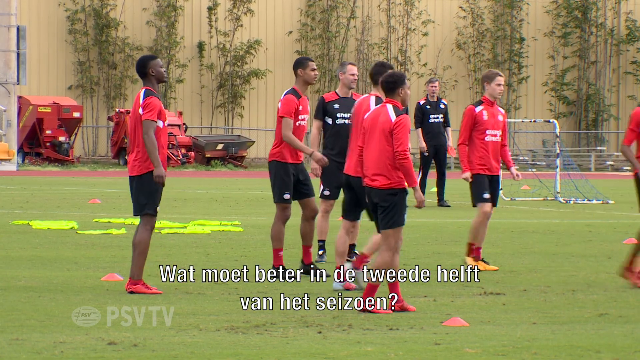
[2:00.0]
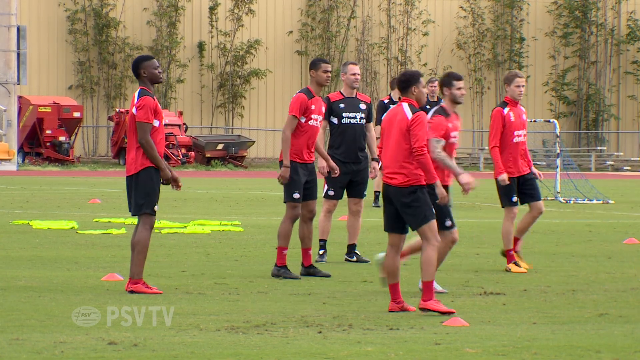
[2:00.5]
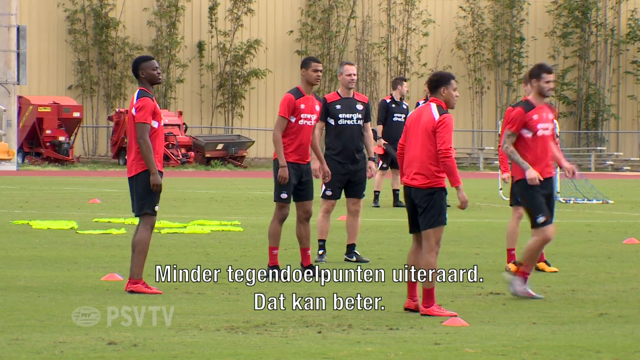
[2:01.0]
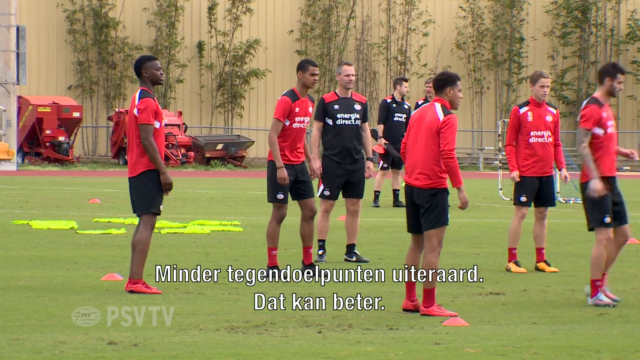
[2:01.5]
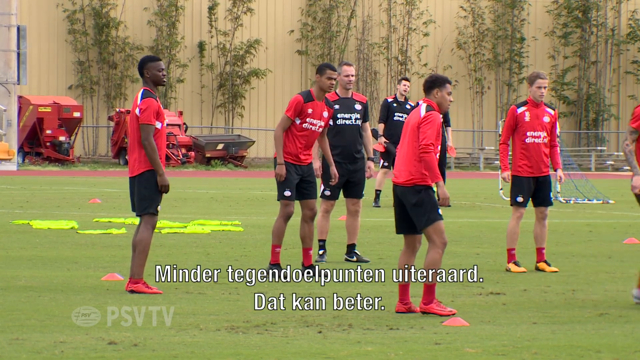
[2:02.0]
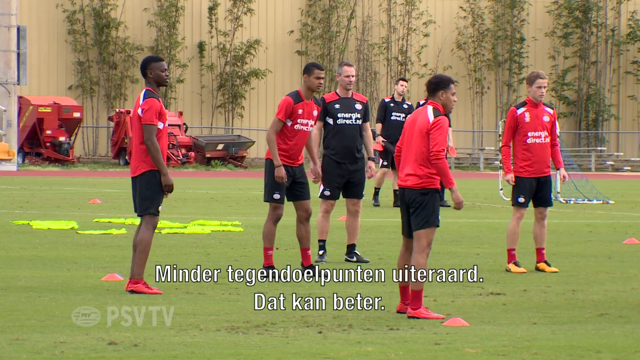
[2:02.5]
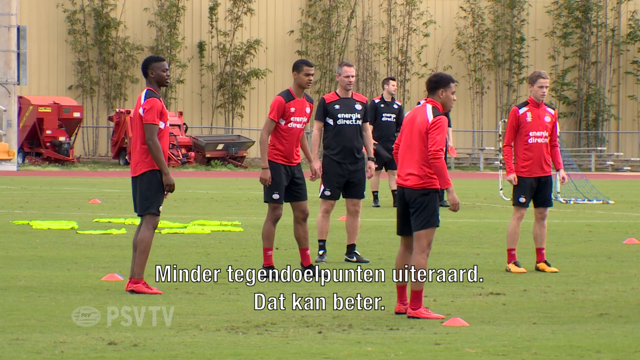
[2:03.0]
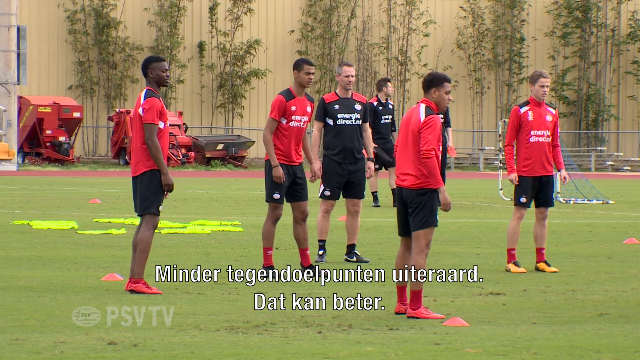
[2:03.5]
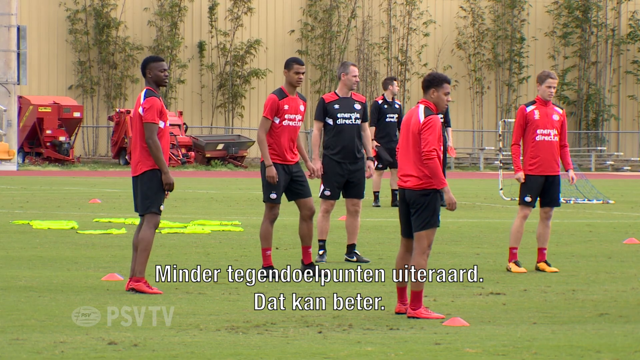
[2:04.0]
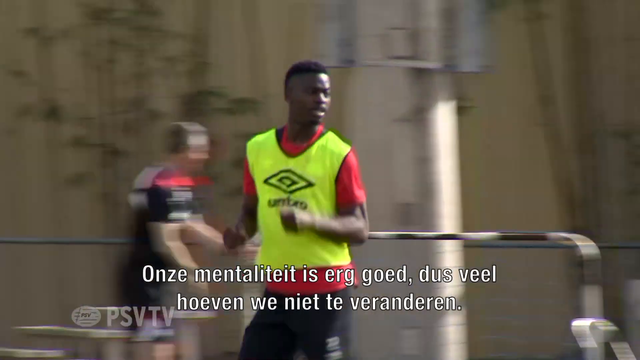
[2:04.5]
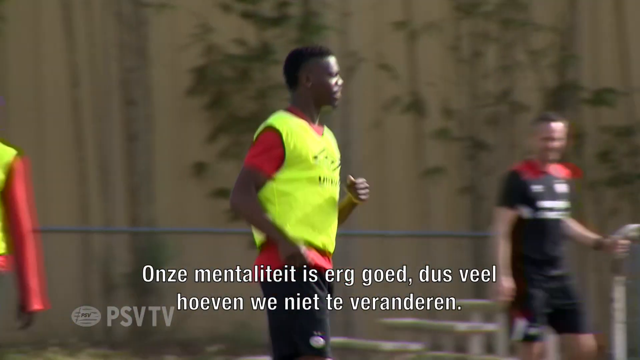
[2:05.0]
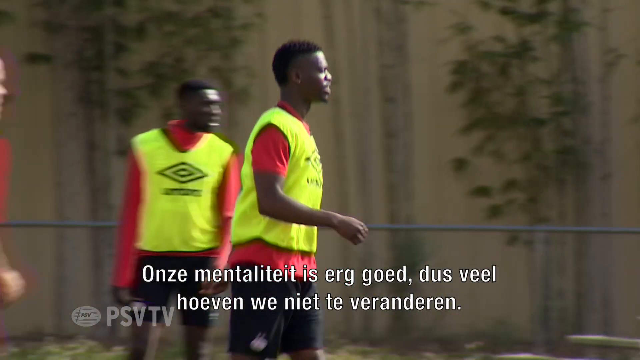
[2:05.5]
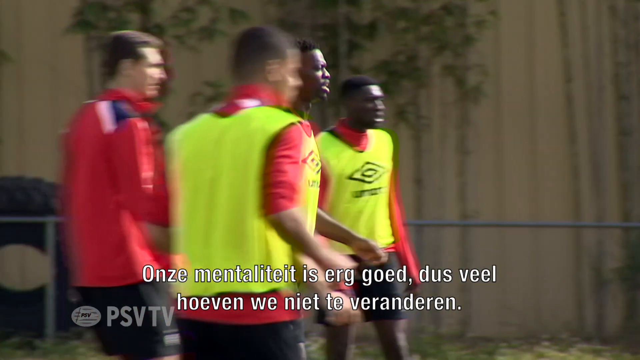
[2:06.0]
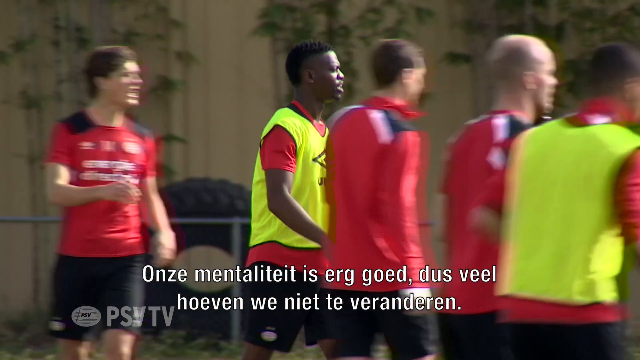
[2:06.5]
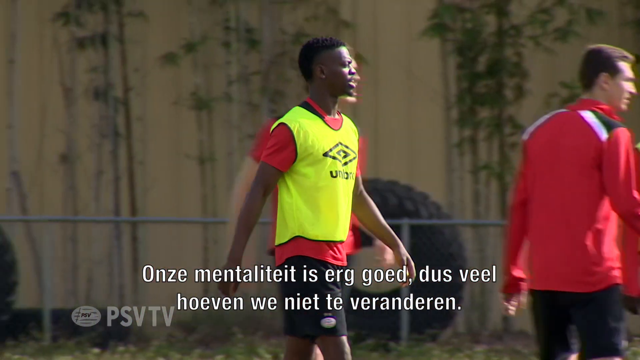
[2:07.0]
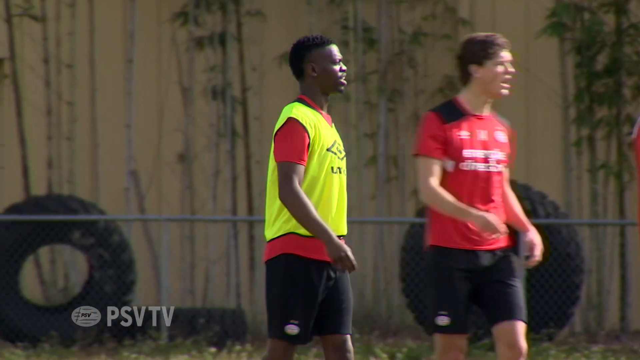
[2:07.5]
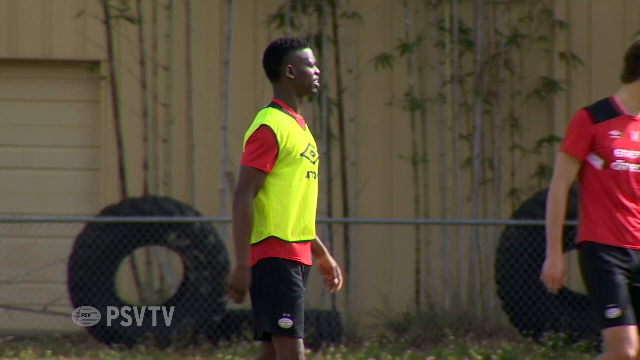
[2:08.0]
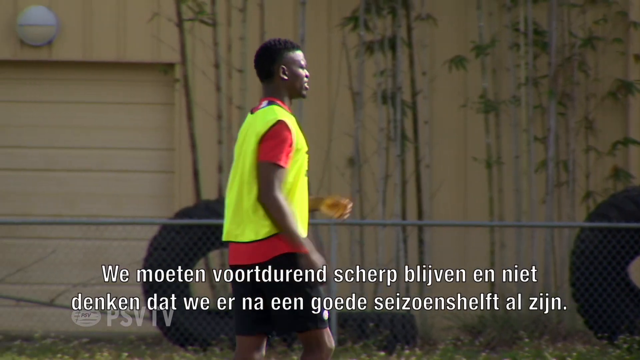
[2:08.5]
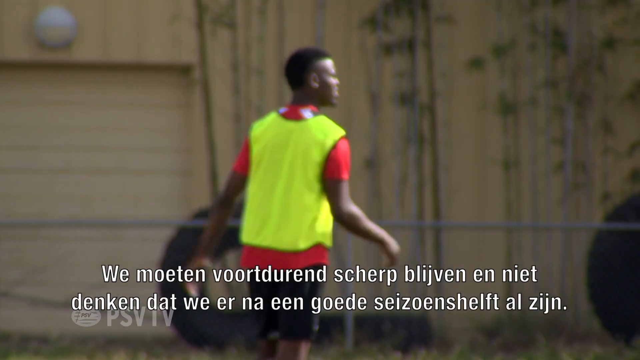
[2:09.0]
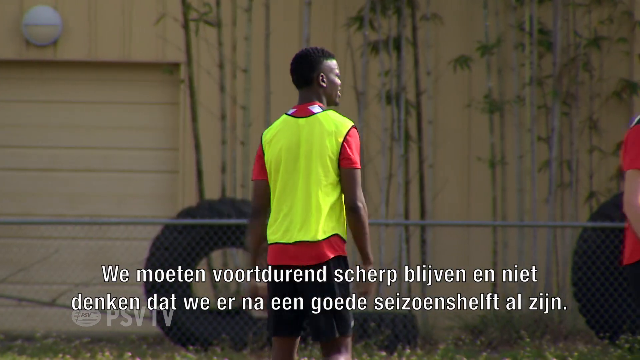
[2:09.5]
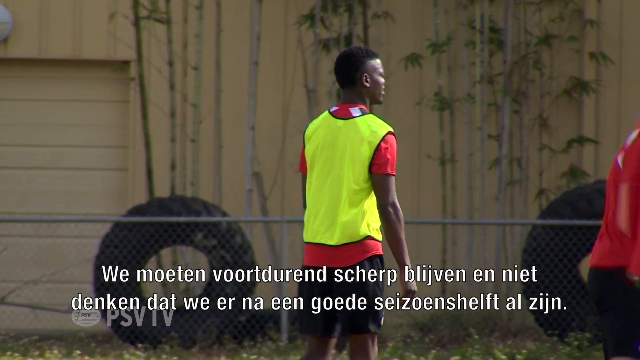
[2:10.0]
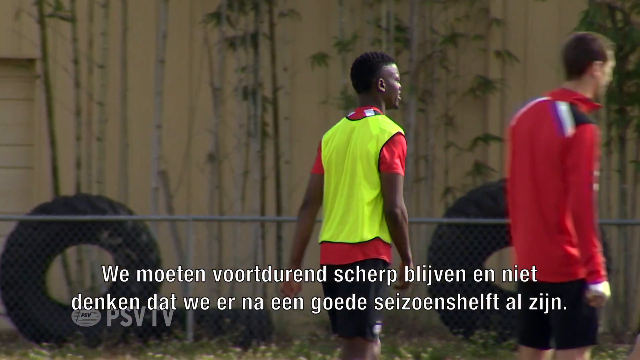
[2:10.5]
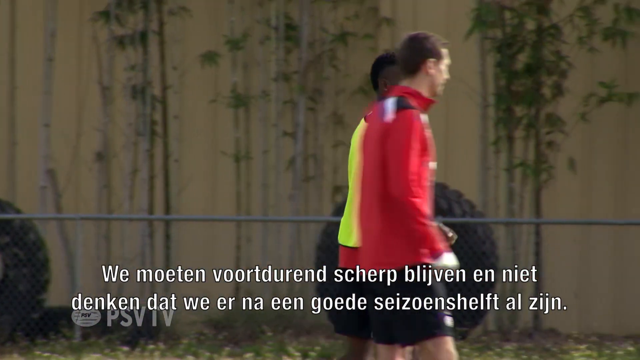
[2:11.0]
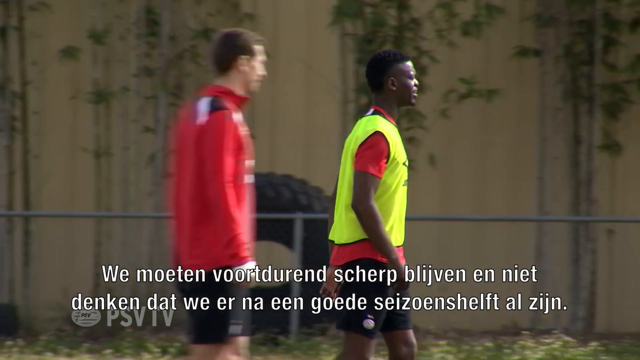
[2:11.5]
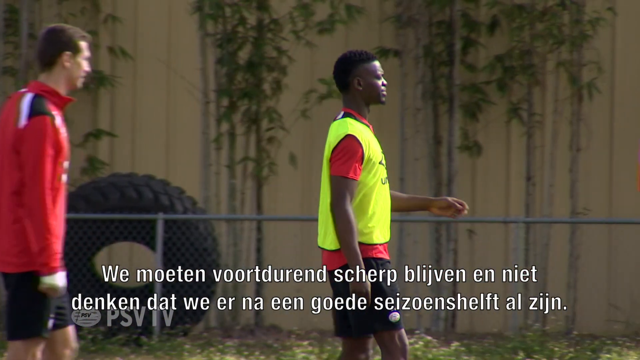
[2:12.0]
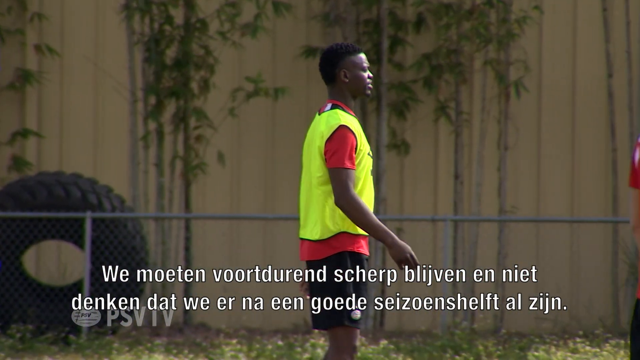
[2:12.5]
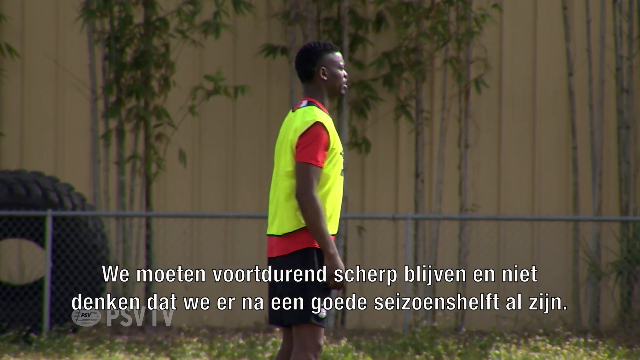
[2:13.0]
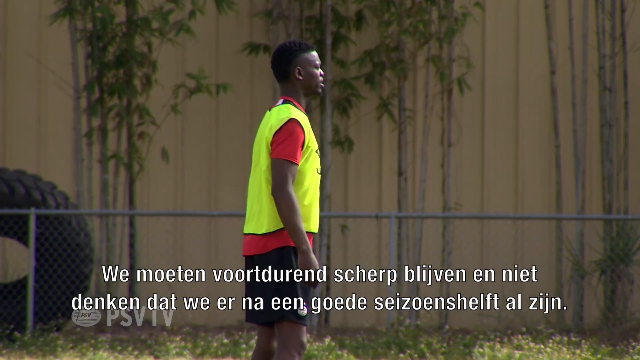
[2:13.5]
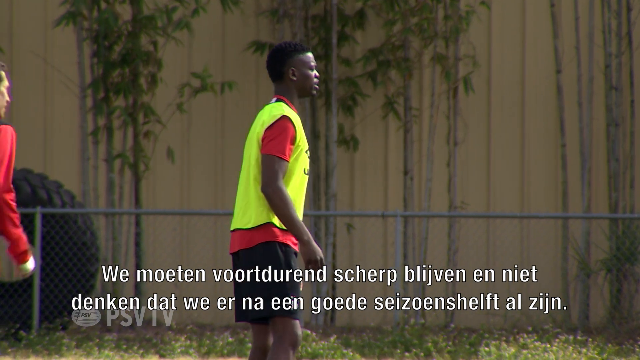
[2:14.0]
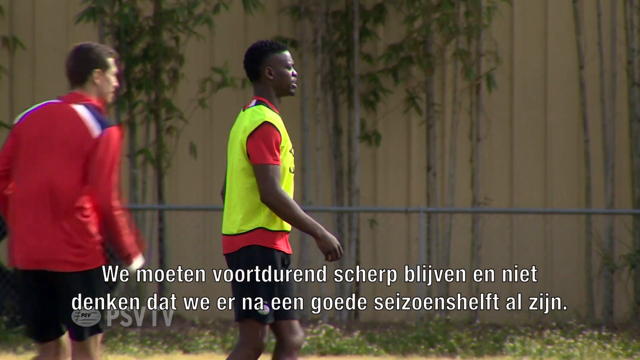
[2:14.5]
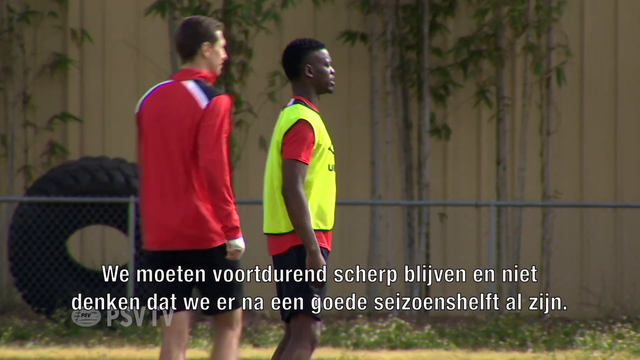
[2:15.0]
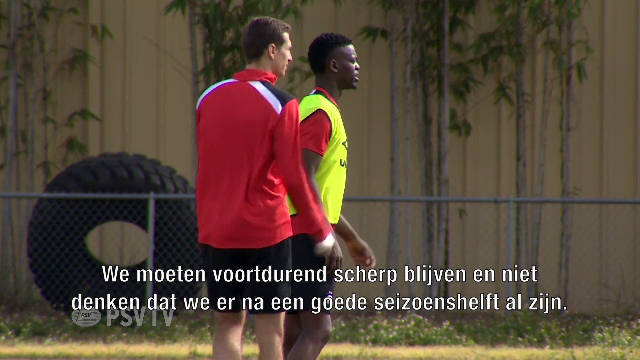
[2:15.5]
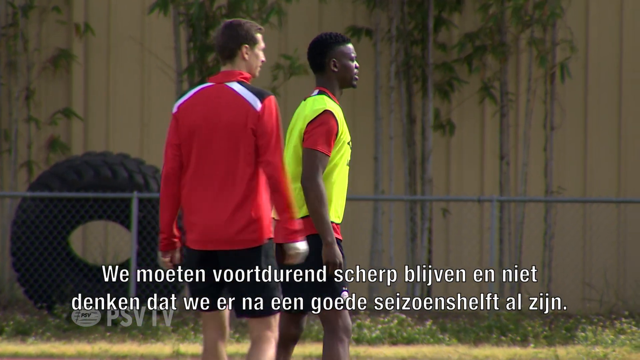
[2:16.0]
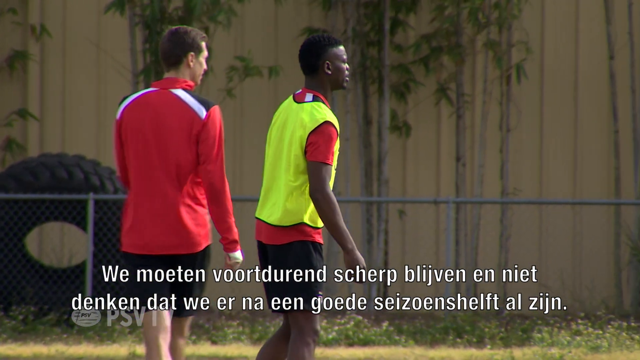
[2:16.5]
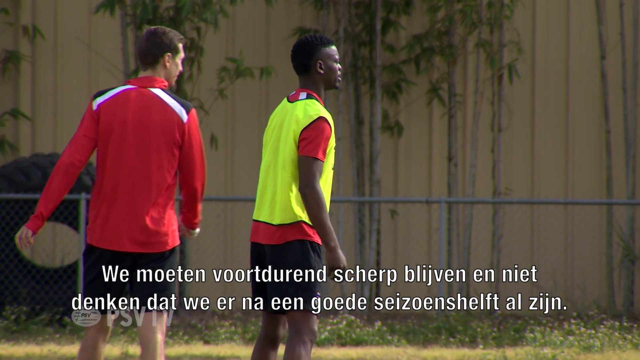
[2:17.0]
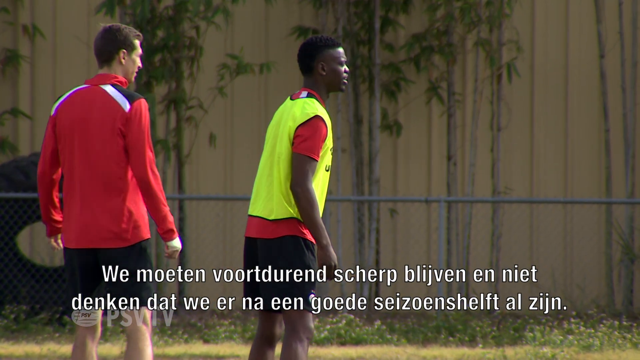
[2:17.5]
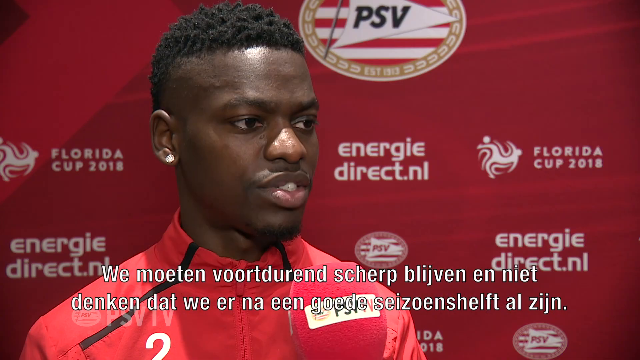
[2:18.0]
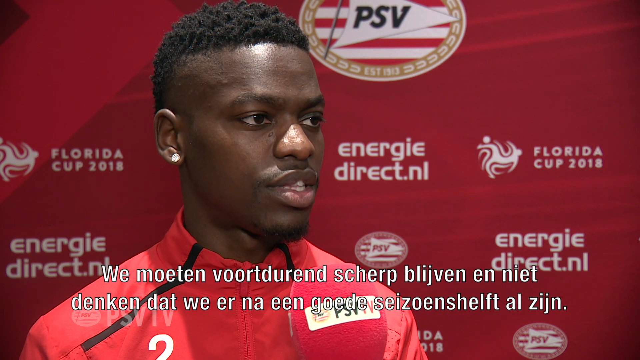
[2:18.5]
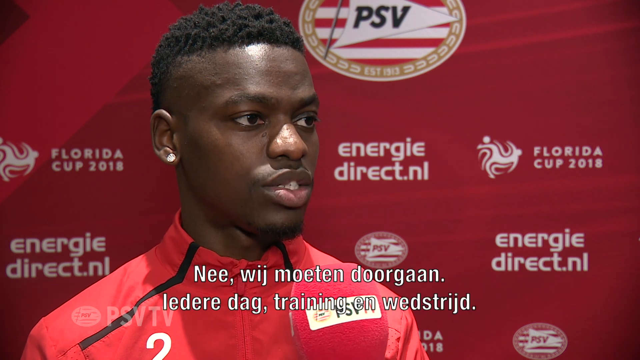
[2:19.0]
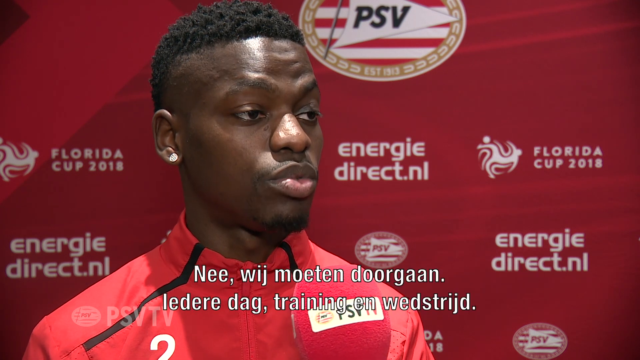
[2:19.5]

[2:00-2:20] A soccer team warms up on a grassy field. They wear mostly red jerseys with black at the shoulders and a little white, mostly red socks and red shoes, though one player has orange shoes. Some older men, either referees or coaches, wear mostly black shirts with a little red and white near the shoulders and white print on the front. In the background, green vines or trees show through at the fence. As they practice, some players wear a yellow jersey over their regular jersey. The man being interviewed stands in front of a red sign that says "Florida Cup 2018".